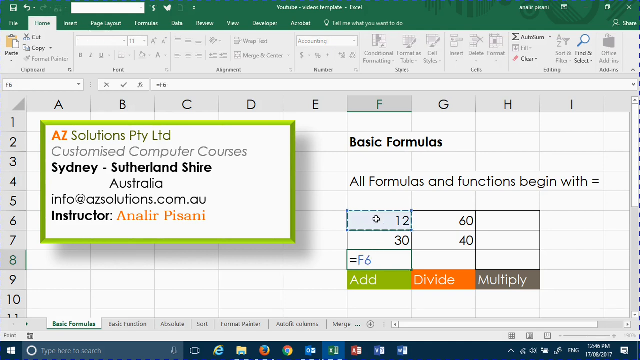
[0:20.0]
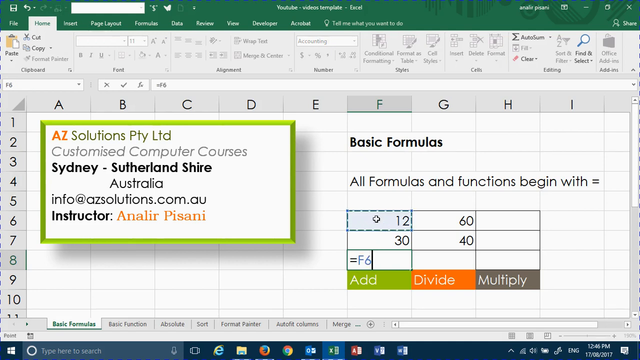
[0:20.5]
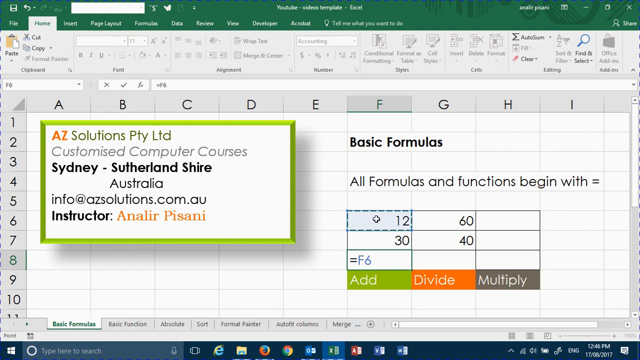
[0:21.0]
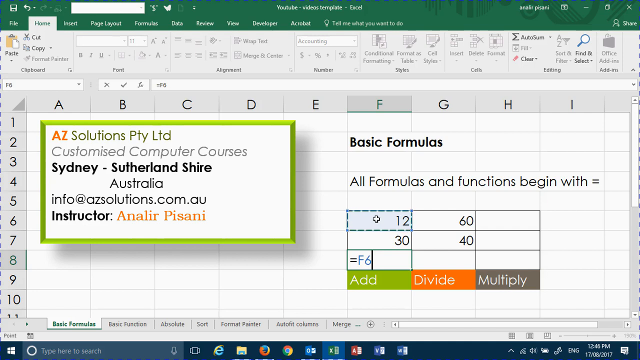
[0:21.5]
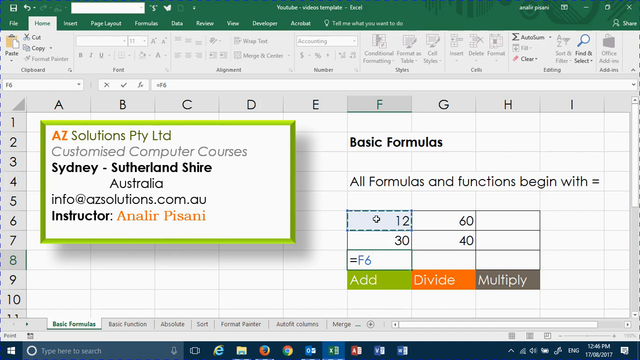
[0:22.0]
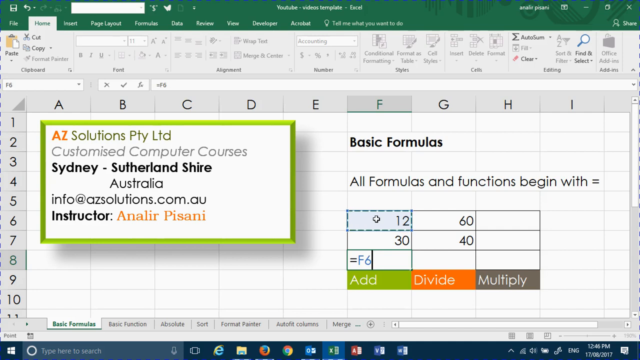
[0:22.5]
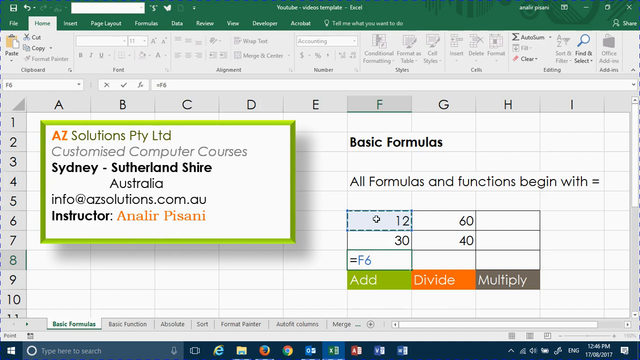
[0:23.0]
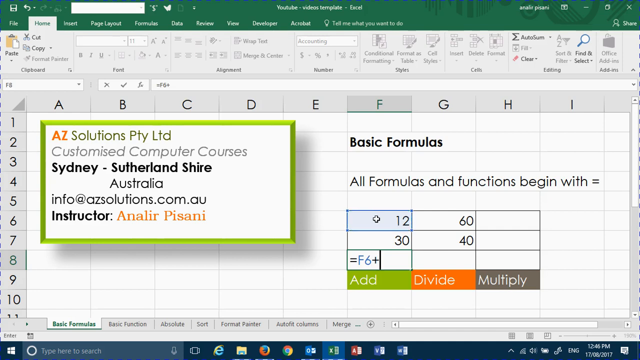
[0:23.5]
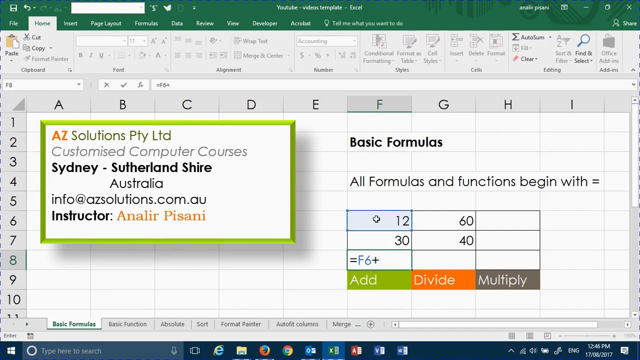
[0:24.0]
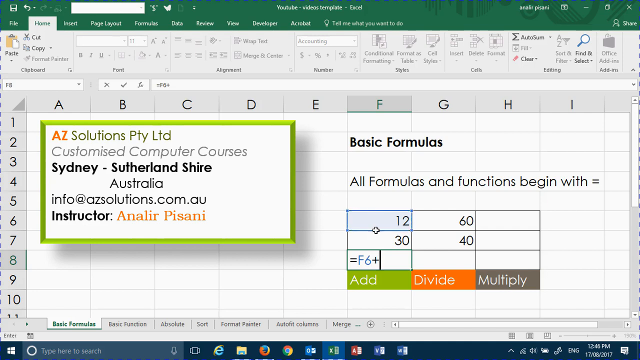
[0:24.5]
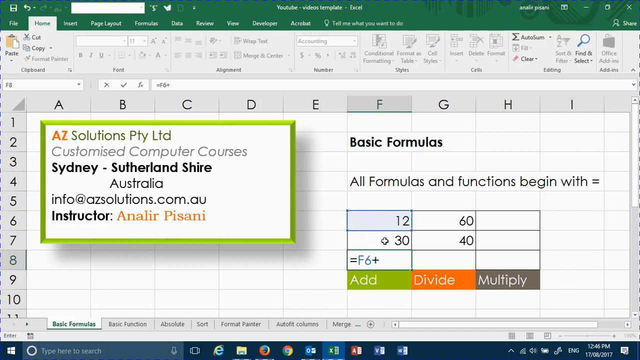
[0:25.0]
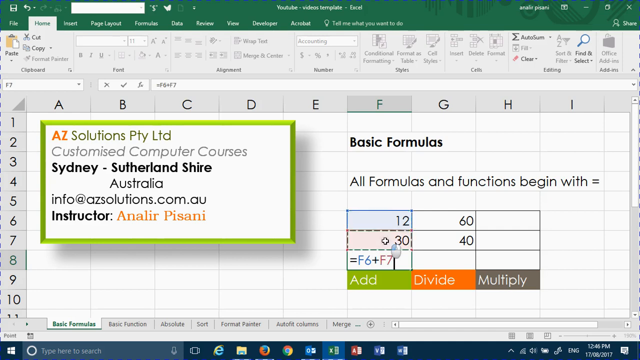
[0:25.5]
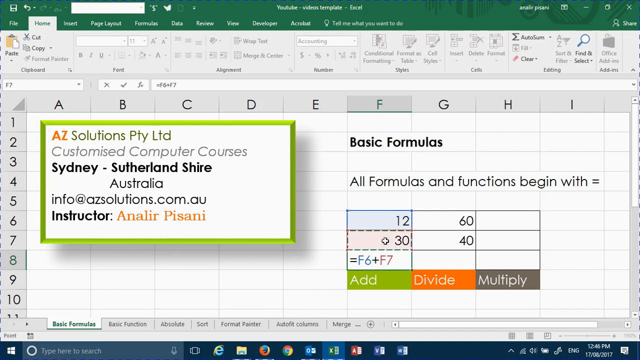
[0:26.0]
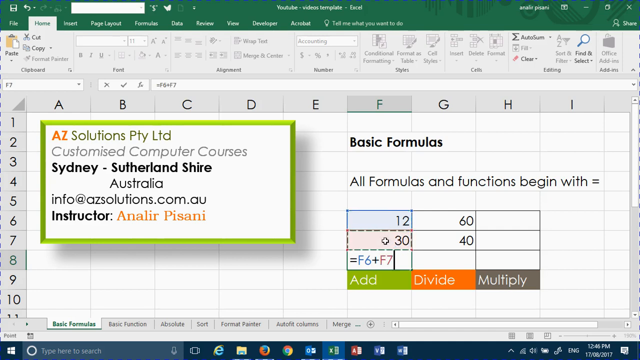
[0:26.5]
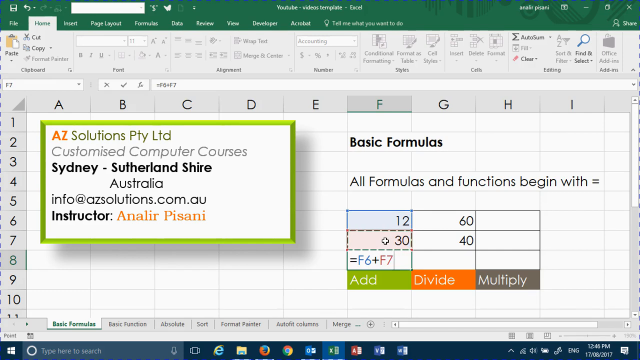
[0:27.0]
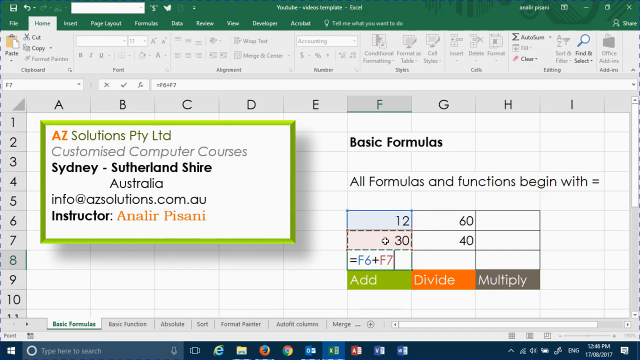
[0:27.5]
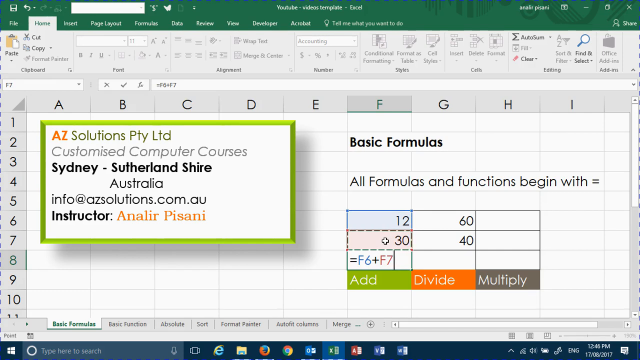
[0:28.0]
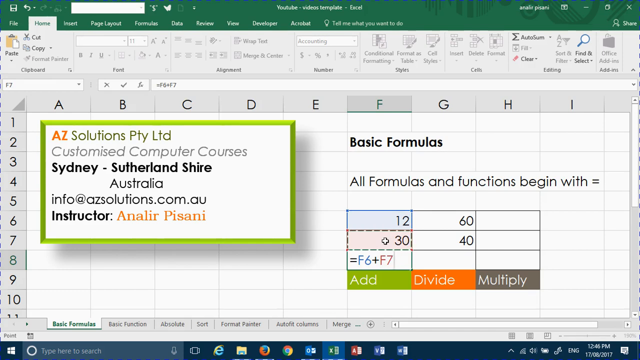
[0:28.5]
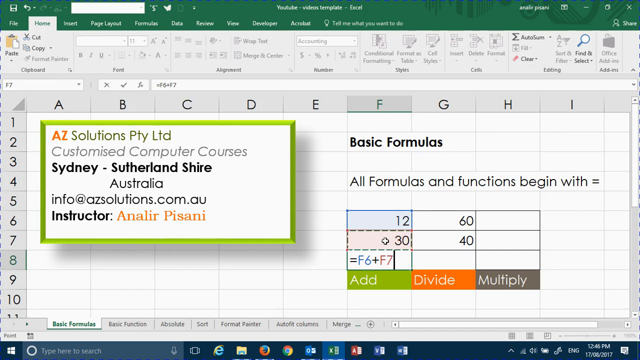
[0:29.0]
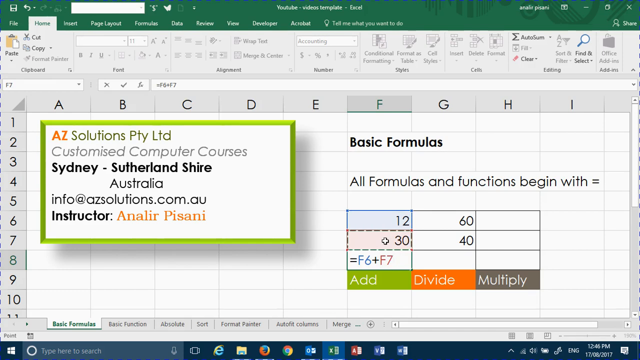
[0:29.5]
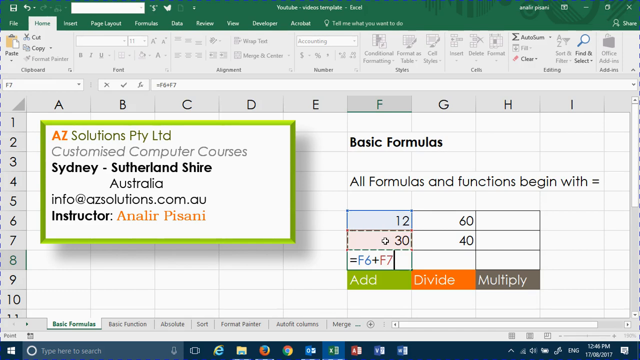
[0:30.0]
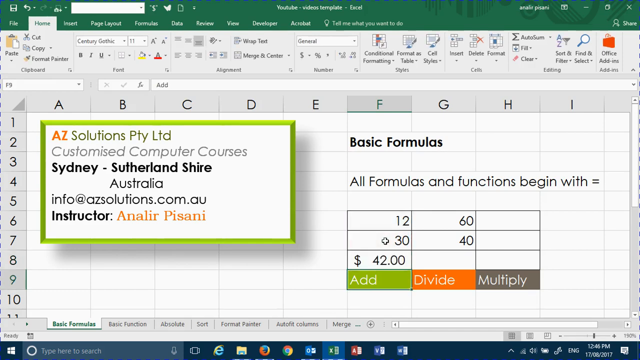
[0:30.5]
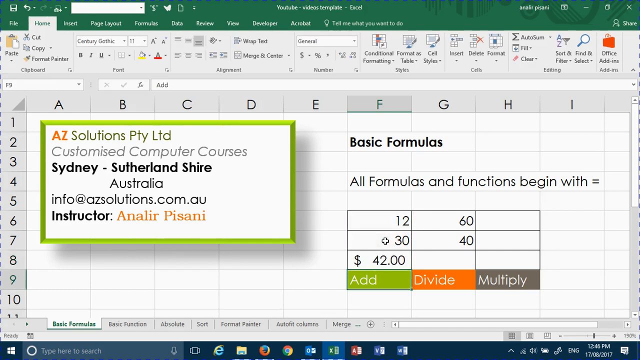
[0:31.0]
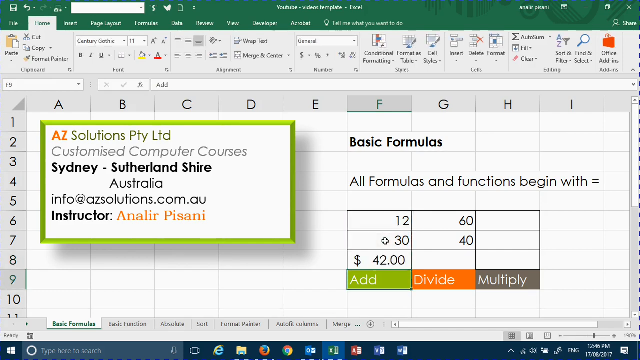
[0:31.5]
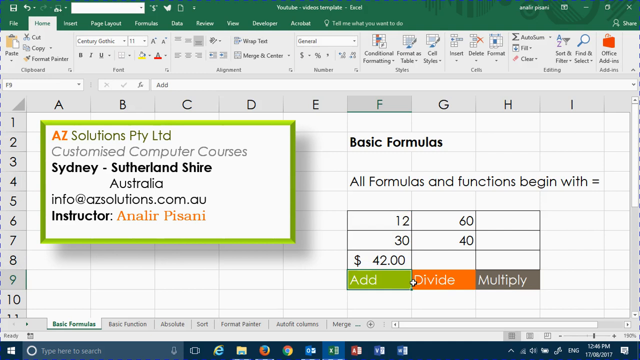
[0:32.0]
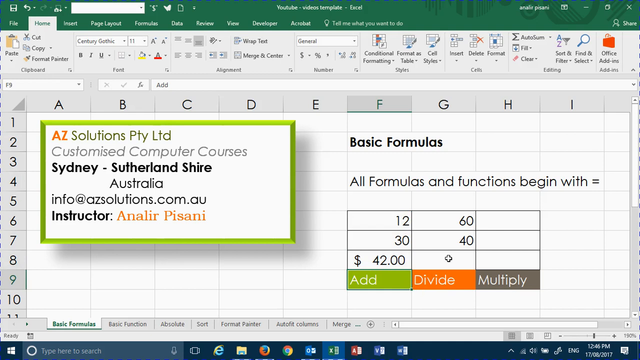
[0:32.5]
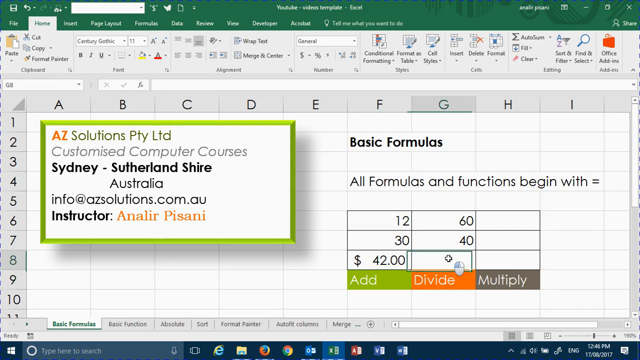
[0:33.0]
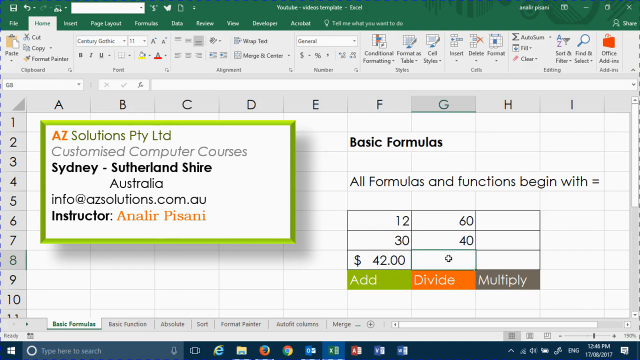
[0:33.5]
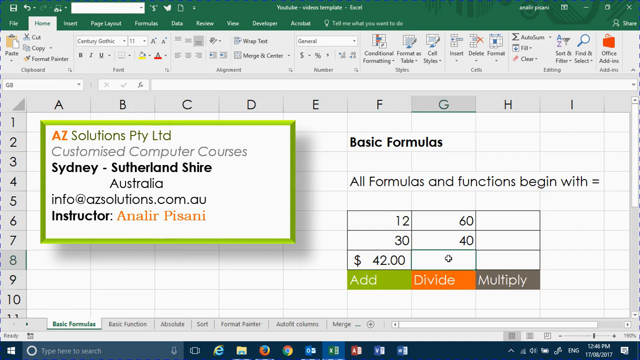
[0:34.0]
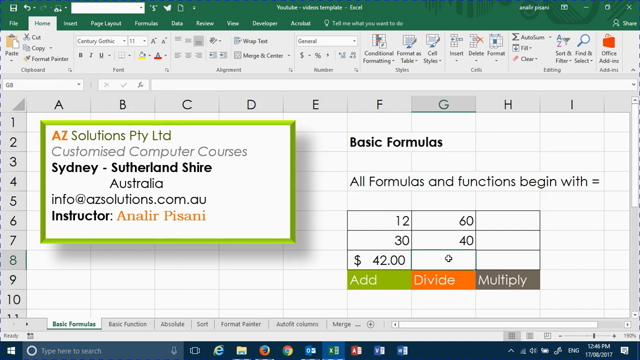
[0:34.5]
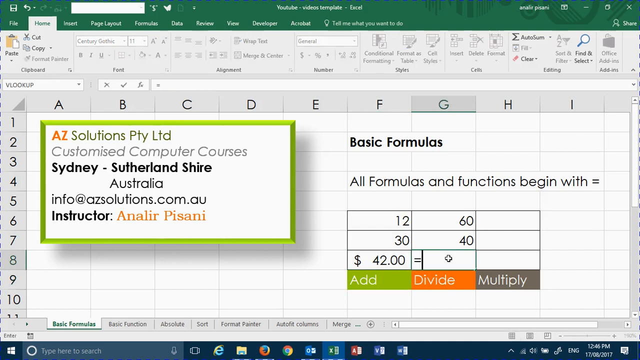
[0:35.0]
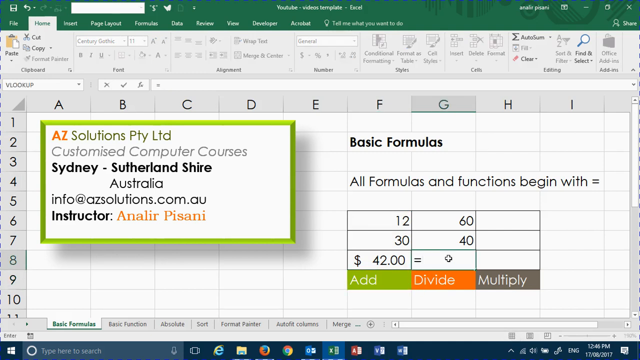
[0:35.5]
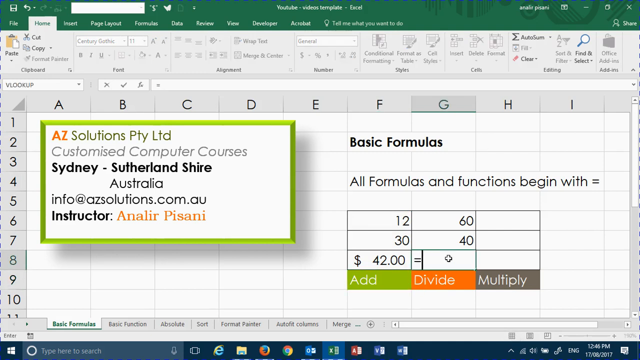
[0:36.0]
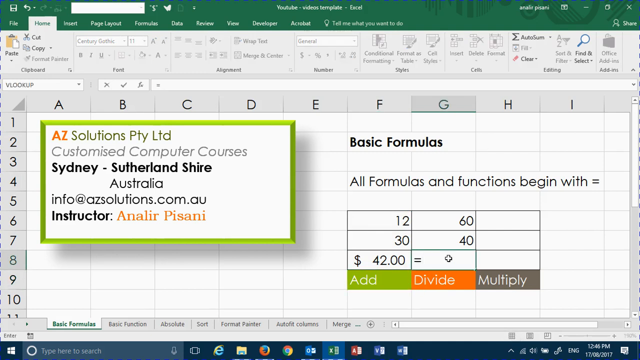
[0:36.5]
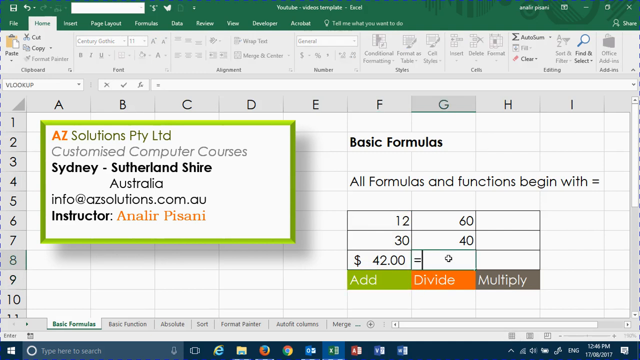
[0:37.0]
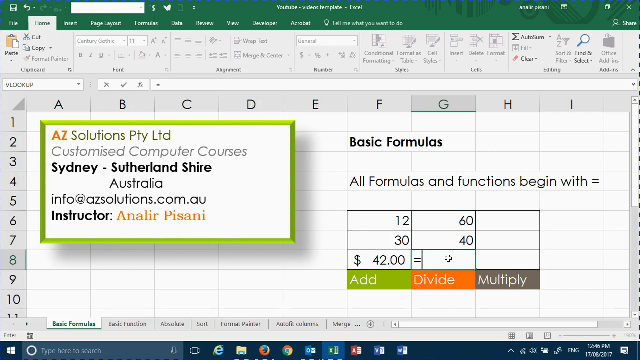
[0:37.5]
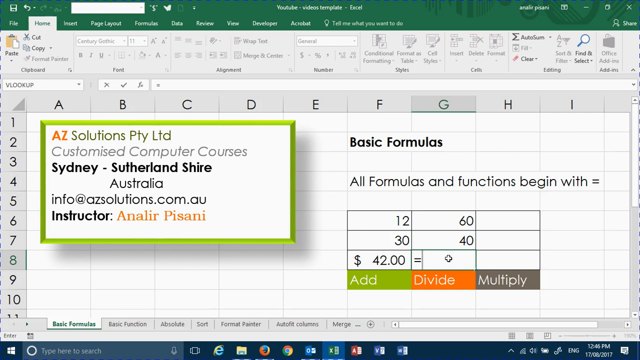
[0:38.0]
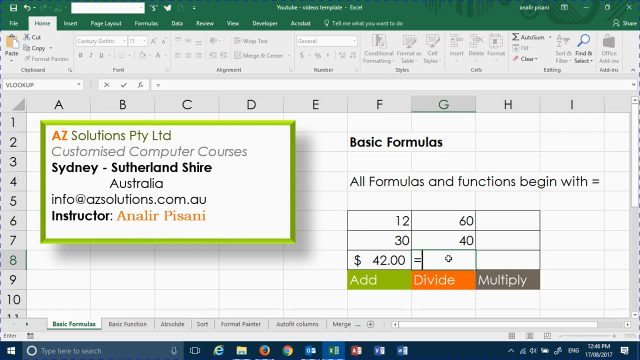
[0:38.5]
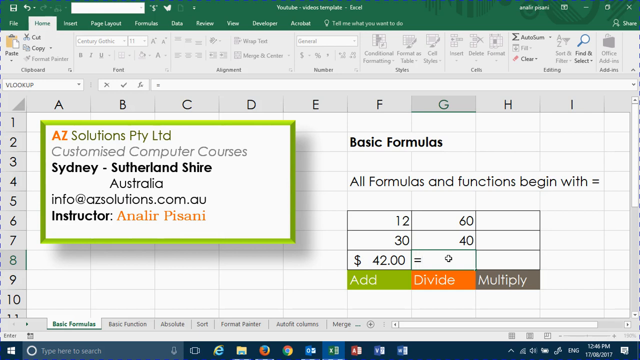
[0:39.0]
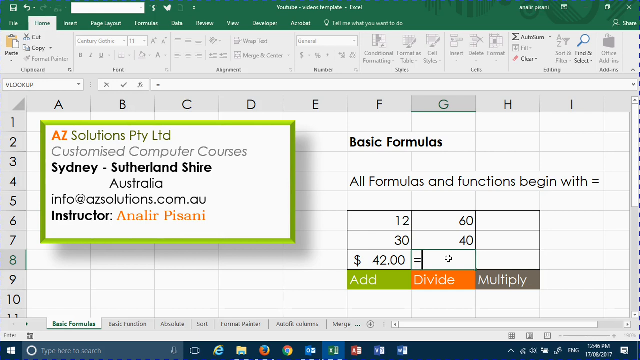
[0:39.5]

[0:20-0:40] After the equal sign, clicking the top cell fills in F6, apparently column F, row 6. F7 is then clicked, creating a formula that adds the two cells together, with the "add" text below as a description. In the center, an equal sign is entered, and the cursor then hovers and waits on it, apparently in preparation for demonstrating a division formula; nothing further is clicked or added.